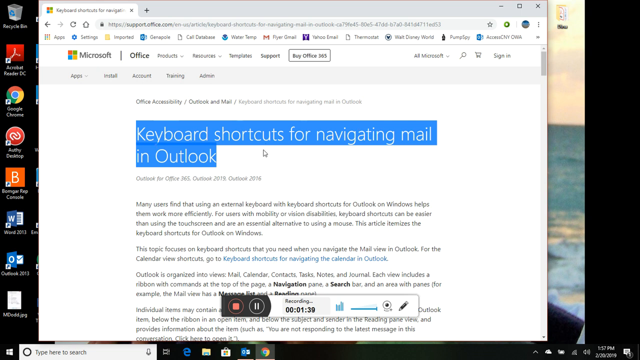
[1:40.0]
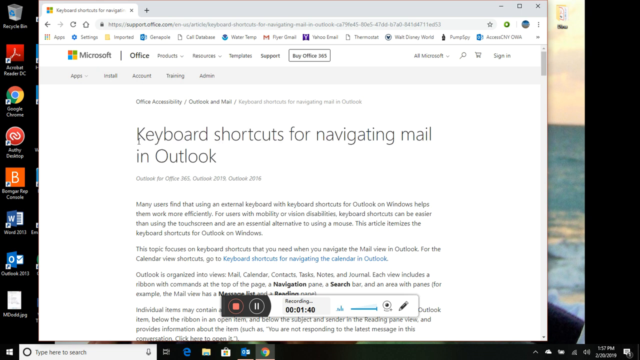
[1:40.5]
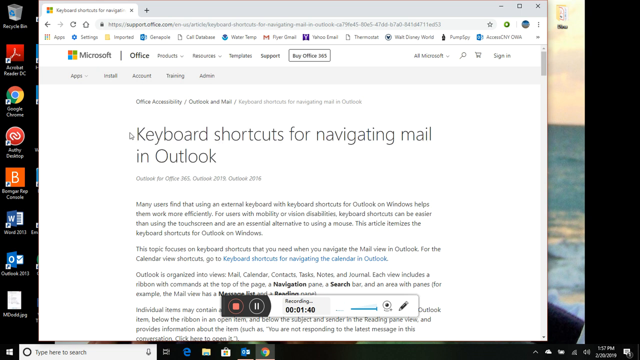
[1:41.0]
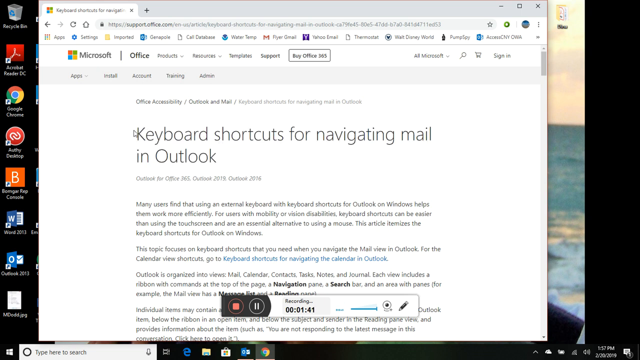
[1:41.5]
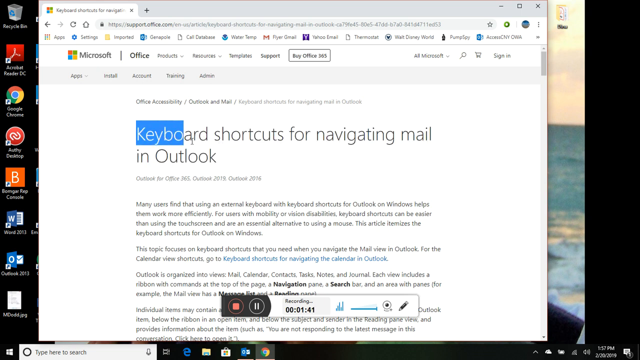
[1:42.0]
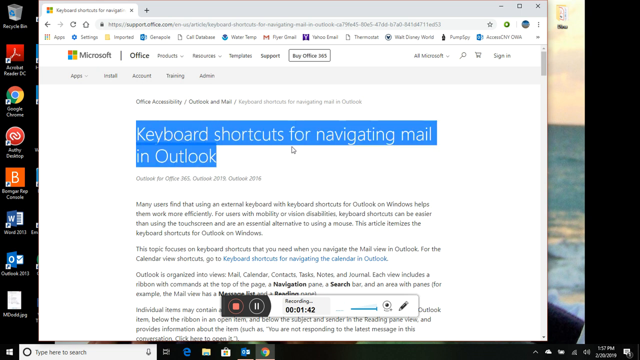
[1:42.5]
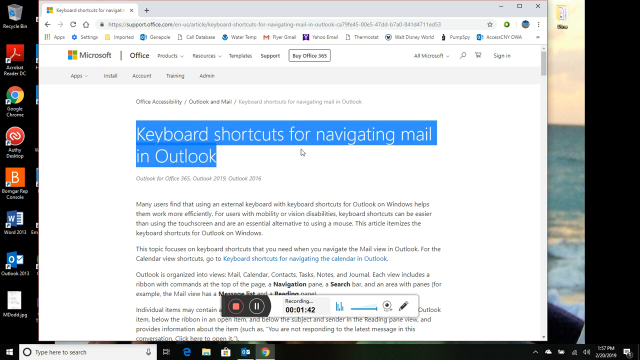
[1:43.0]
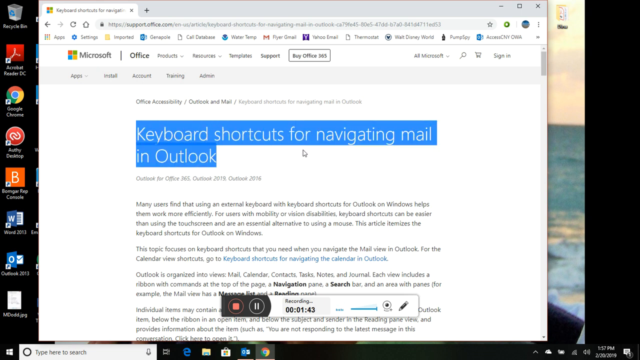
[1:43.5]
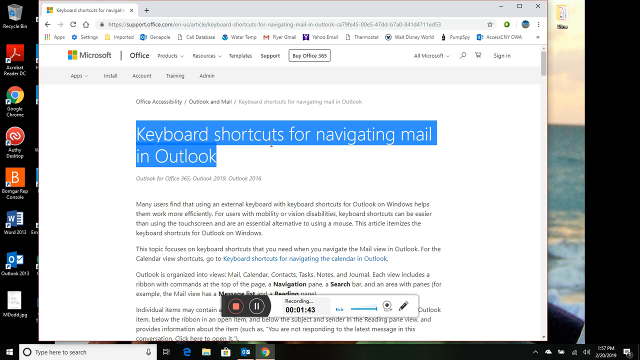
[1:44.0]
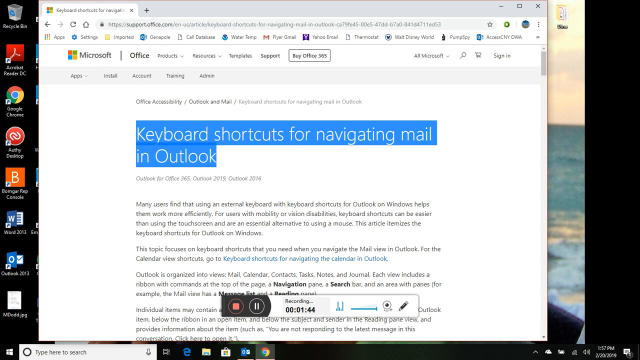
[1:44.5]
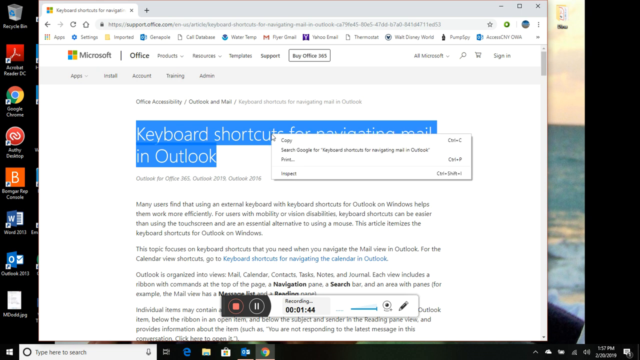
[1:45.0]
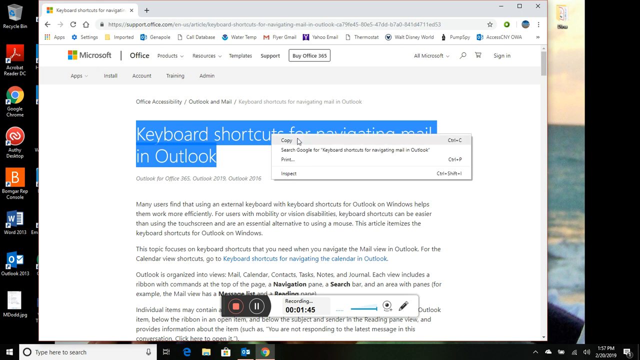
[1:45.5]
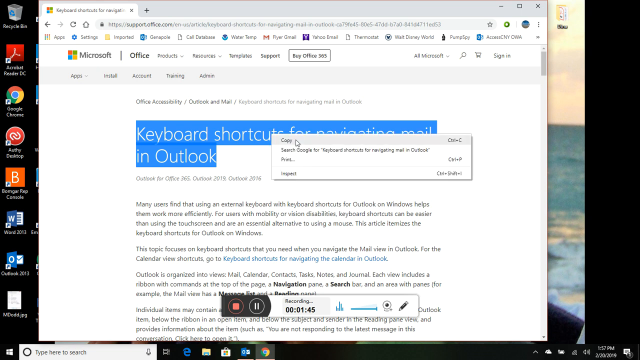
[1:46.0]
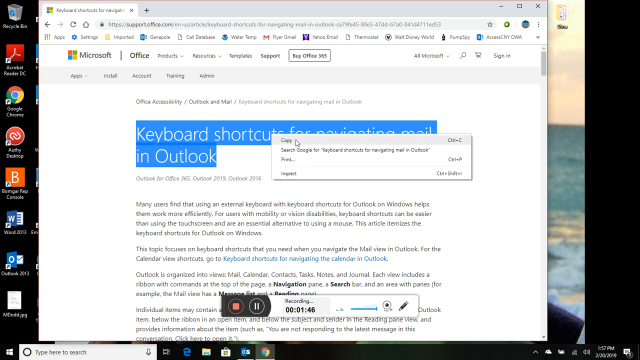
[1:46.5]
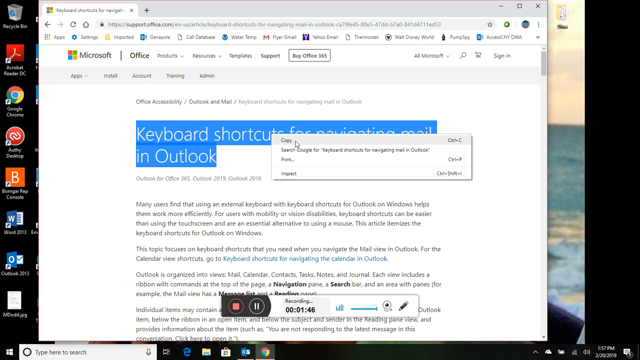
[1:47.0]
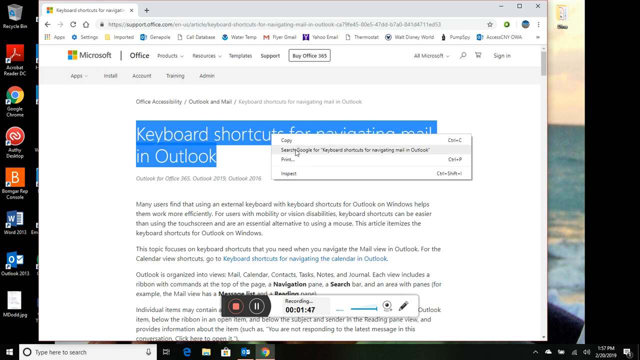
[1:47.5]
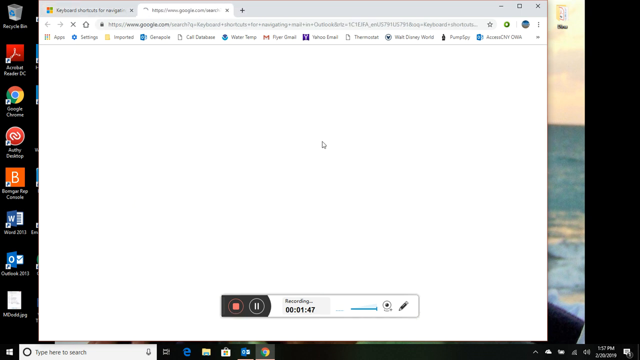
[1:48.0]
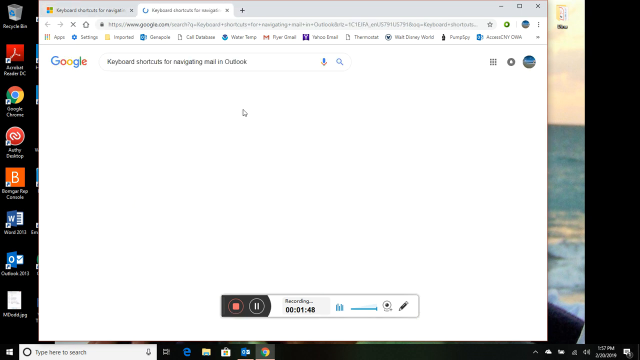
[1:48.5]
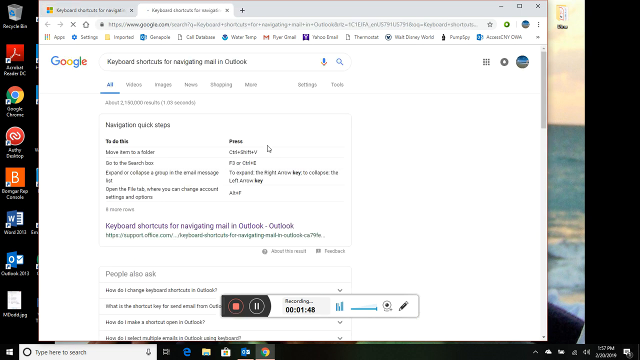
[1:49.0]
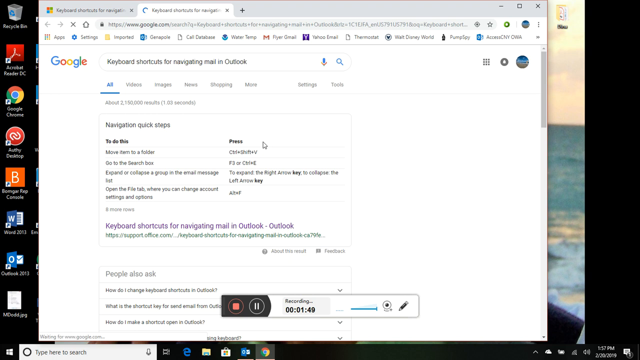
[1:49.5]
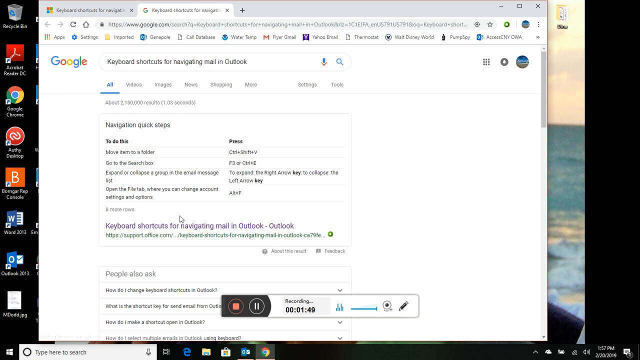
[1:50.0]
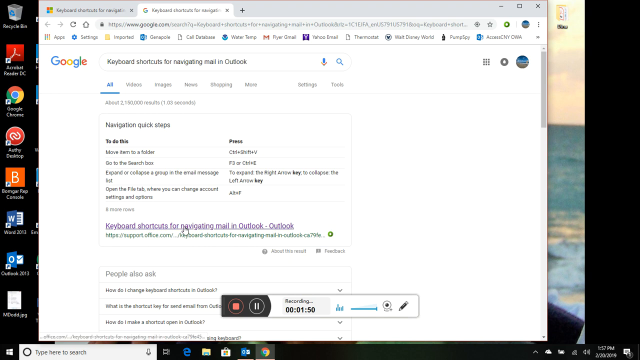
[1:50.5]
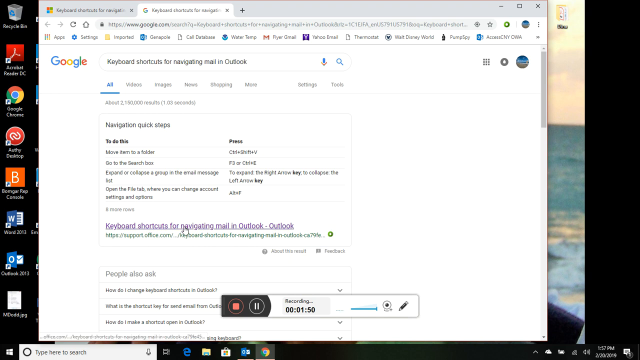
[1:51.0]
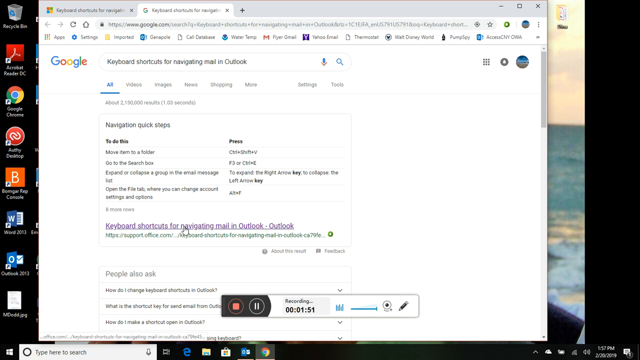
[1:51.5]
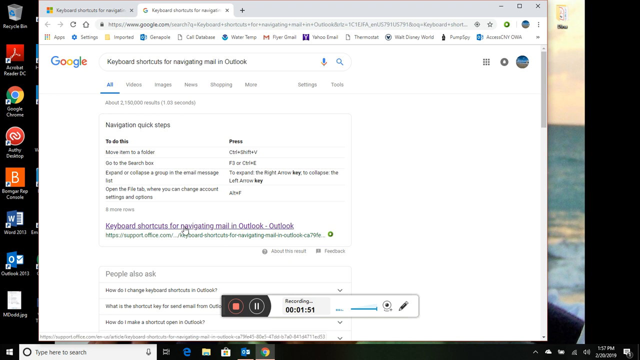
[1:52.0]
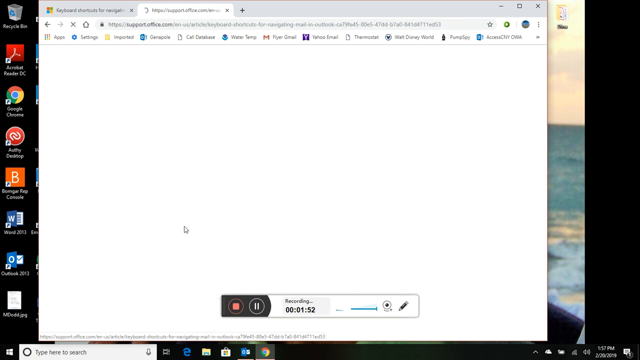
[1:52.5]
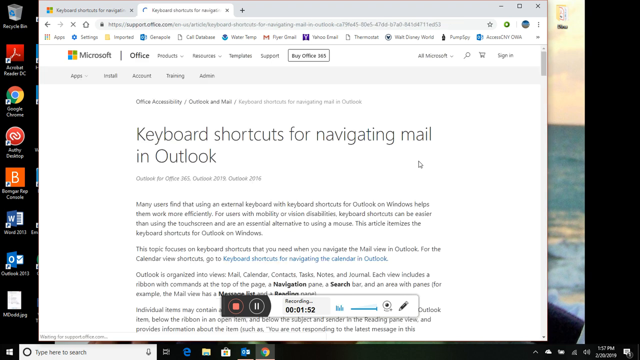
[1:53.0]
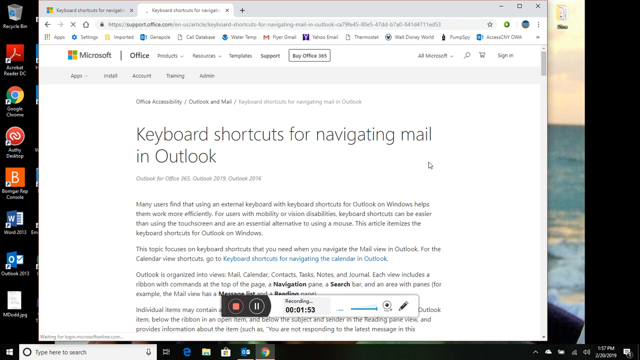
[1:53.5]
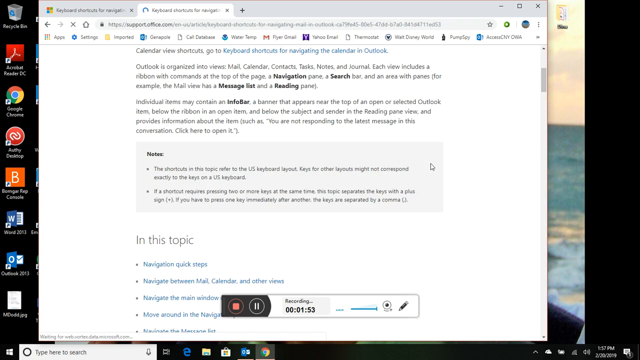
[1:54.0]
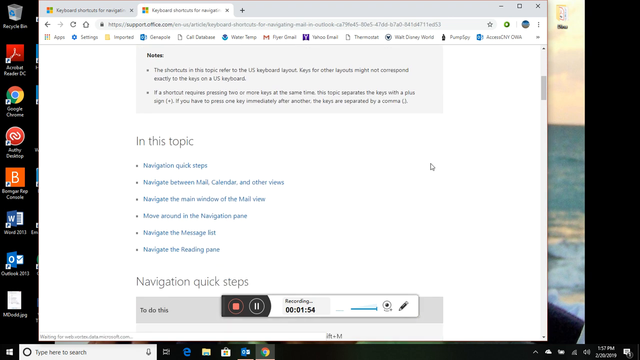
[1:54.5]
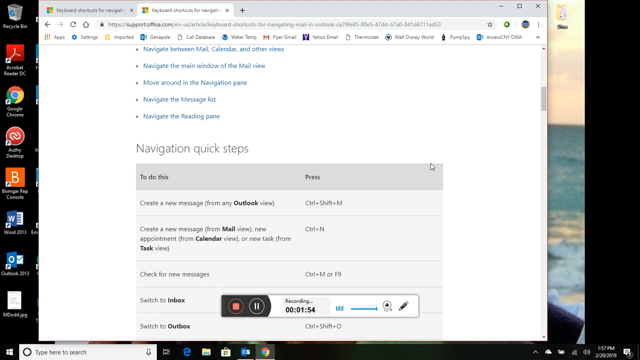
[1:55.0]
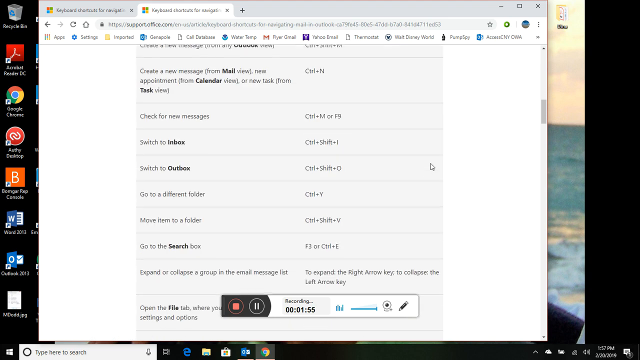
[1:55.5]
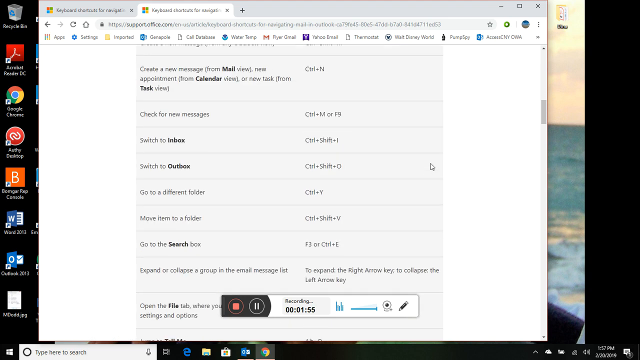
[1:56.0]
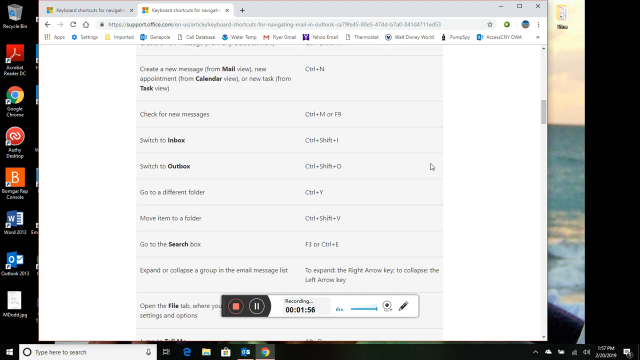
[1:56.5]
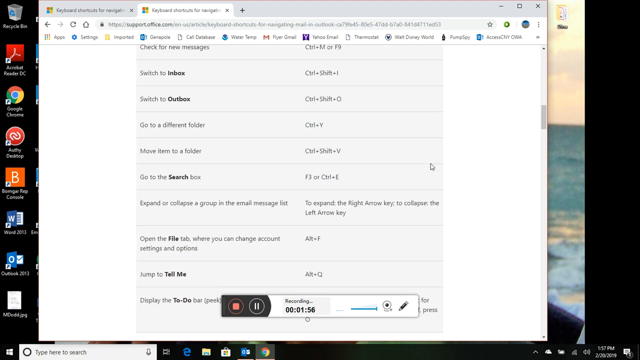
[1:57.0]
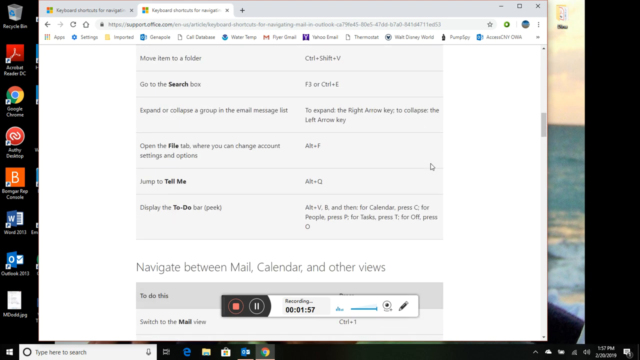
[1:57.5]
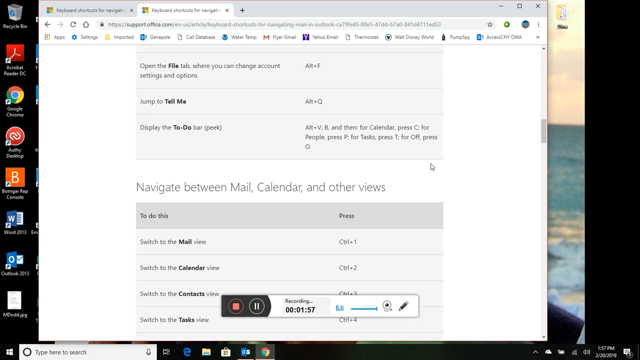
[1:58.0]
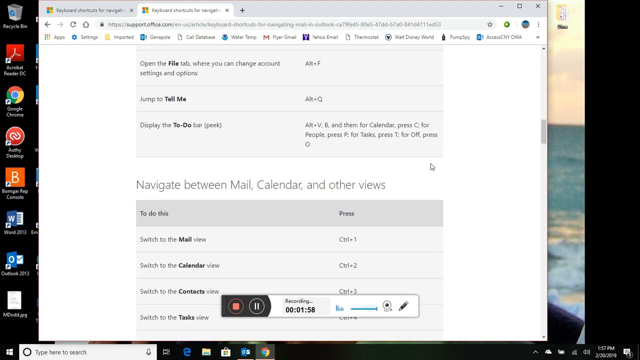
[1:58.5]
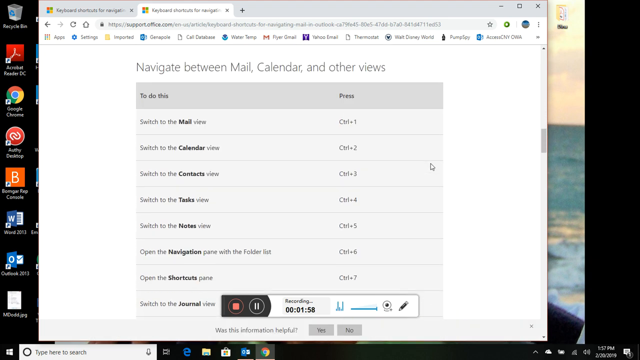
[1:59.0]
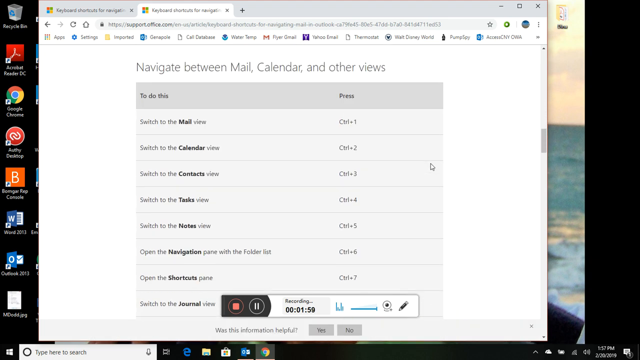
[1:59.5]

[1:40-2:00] He highlights text, though not the whole thing, right-clicks on the highlighted text, and goes to a new tab where it is displayed. The new tab shows a page of search results for the highlighted search. It appears to be a tutorial on navigating Outlook.